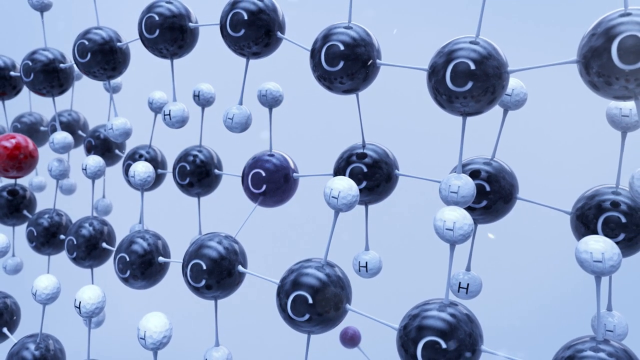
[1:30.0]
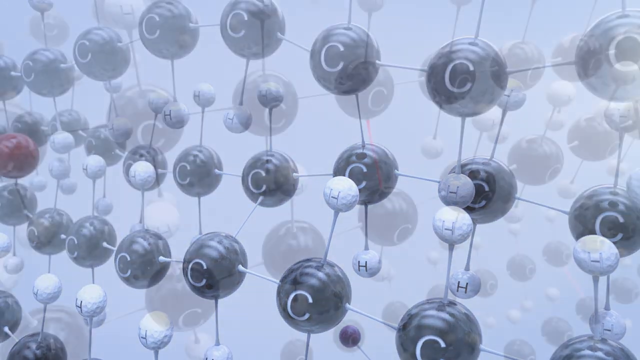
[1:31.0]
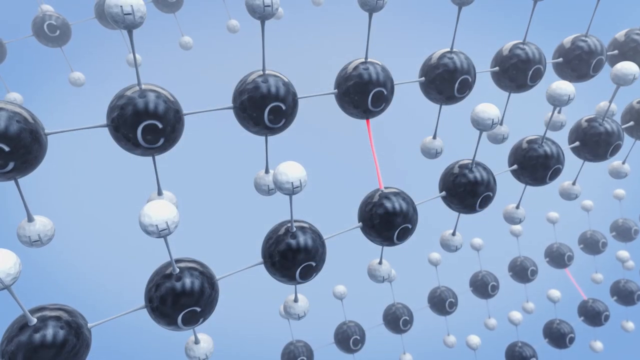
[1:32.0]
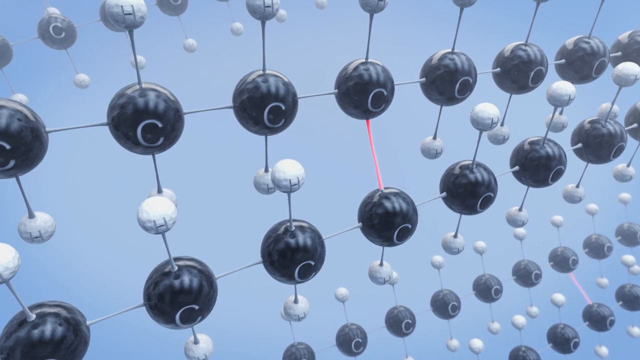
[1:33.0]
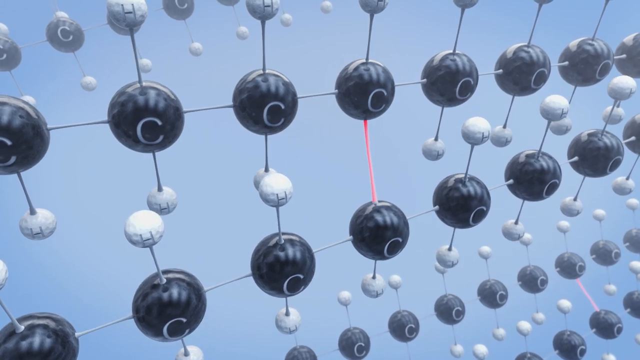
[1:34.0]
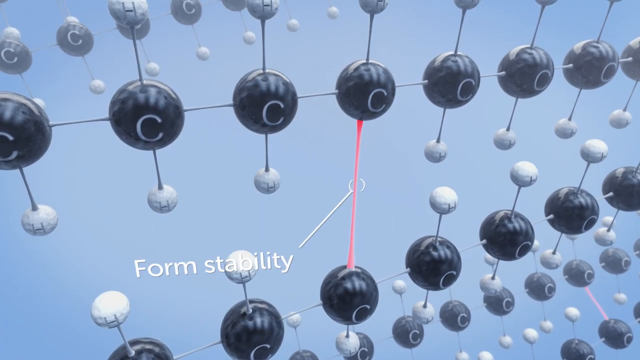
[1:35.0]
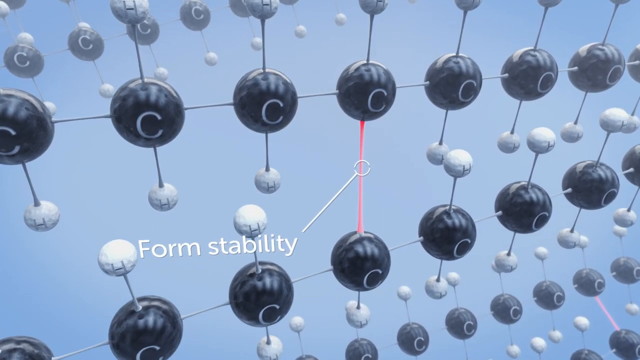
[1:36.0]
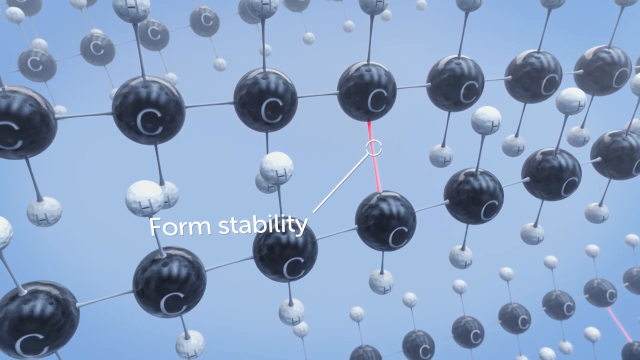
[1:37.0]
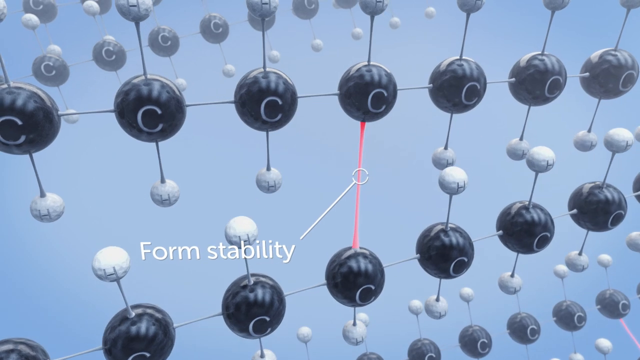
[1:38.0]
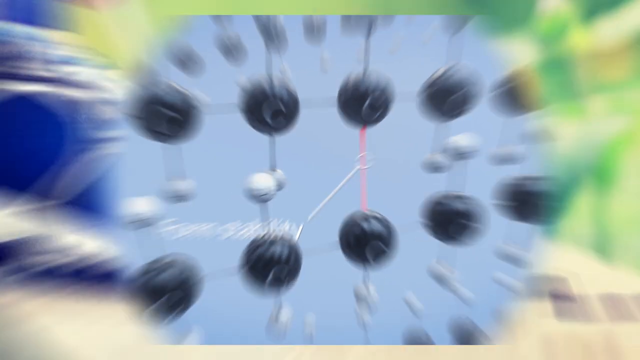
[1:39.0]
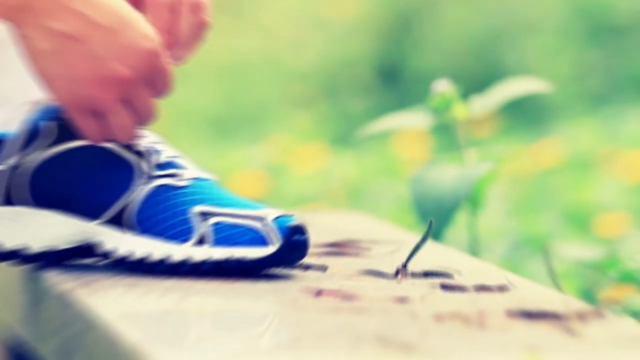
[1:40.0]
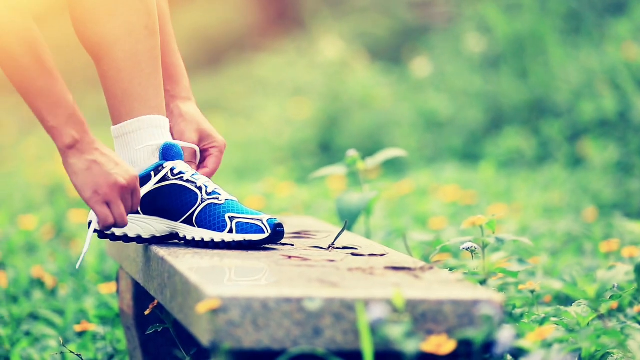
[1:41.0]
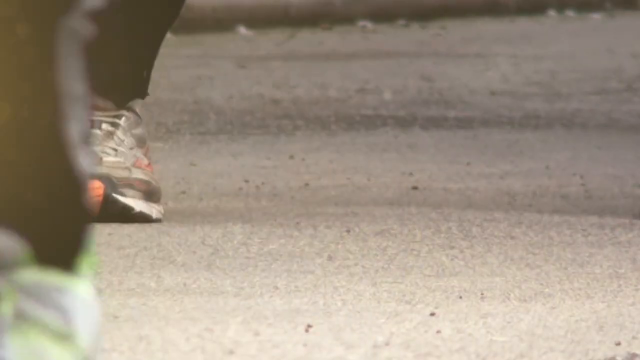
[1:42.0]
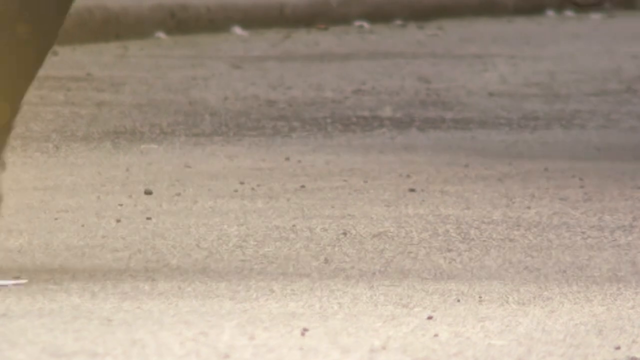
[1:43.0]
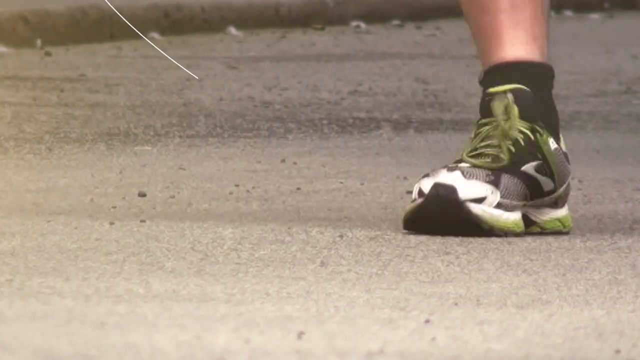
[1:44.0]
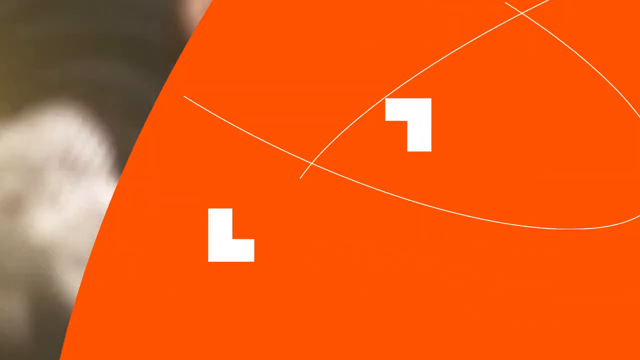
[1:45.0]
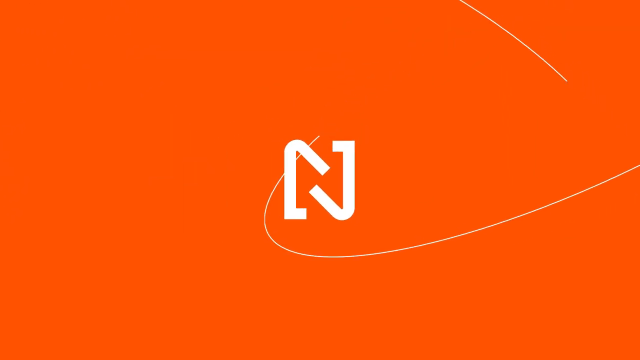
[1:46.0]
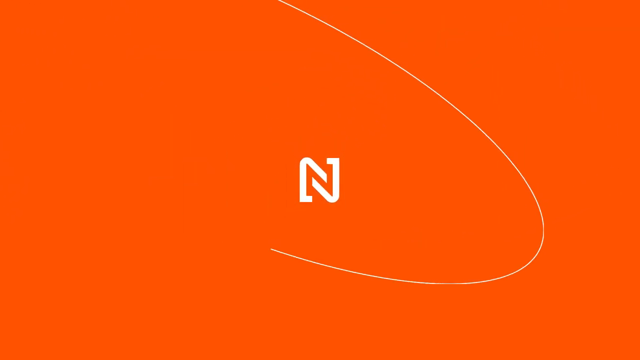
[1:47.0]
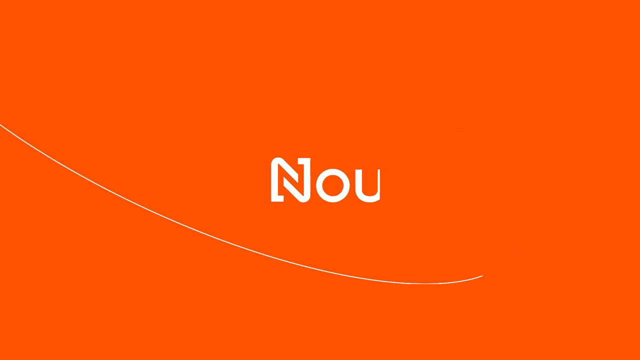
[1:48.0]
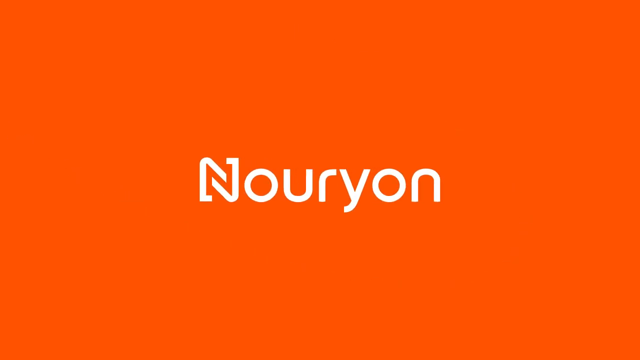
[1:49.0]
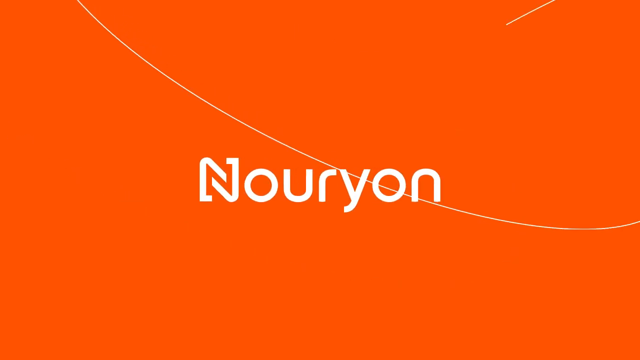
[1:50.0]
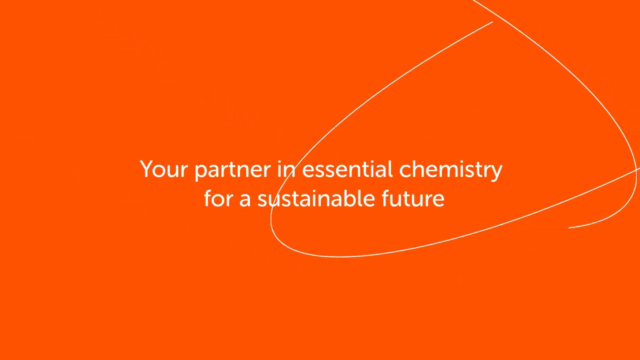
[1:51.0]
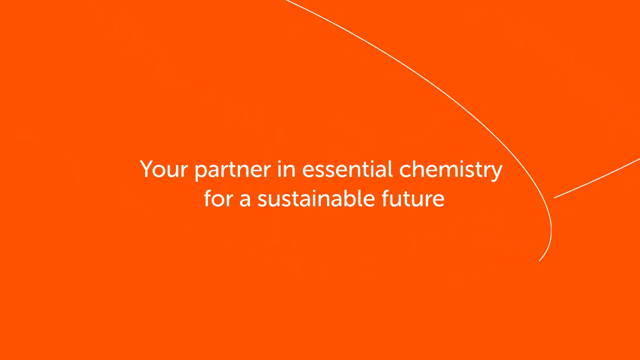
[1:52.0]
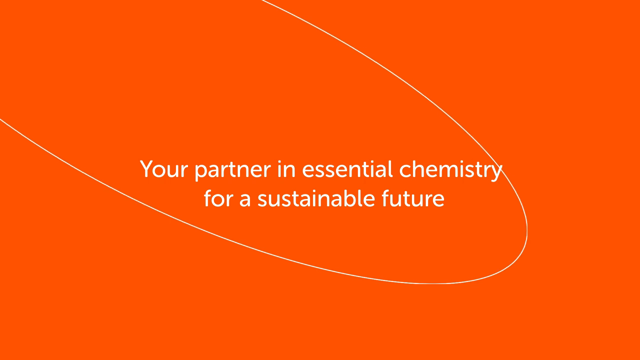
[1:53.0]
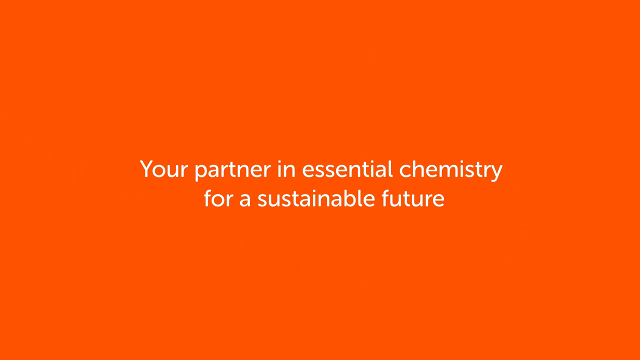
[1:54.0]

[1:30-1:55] Three rows of black balls run horizontally across the screen, with about nine or ten balls in each row, each marked with the letter C. Little stems come off the top and bottom of the balls, with white balls connected at their ends, each marked with the letter H. One of the rows moves away from the other, and a red line connects the top row to the row beneath it; an arrow comes off the red line with the words "FORM STABILITY" written in white at its tip. The structure then flexes back and forth. Next a concrete bench appears in a green area with green grass, green plants and some yellow flowers. Someone's left foot is up on the bench; only their sock, ankle and hands are visible as they tie their shoe. The shoe is dark blue with black, light blue and white.